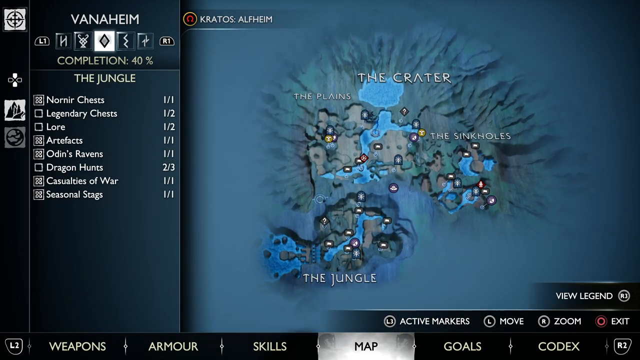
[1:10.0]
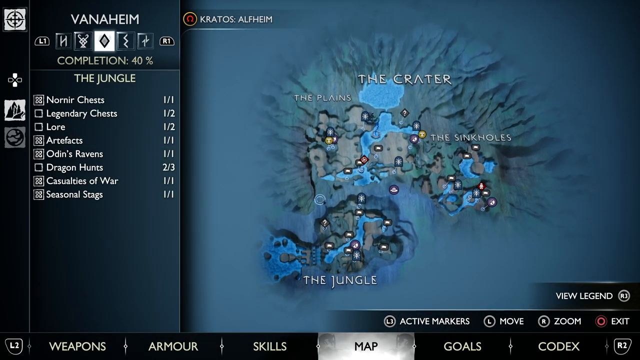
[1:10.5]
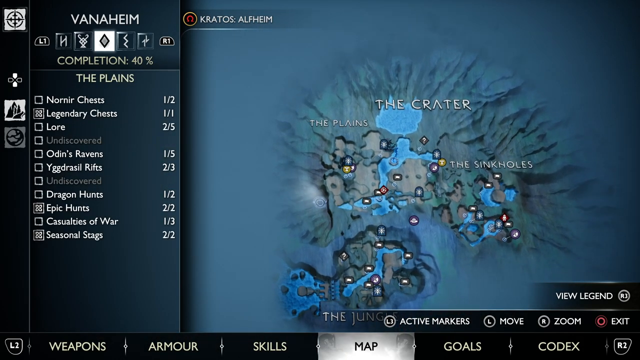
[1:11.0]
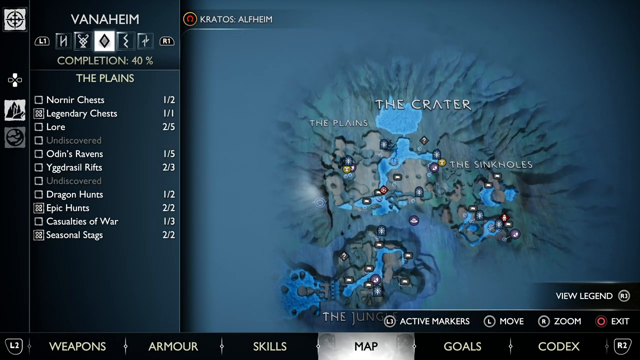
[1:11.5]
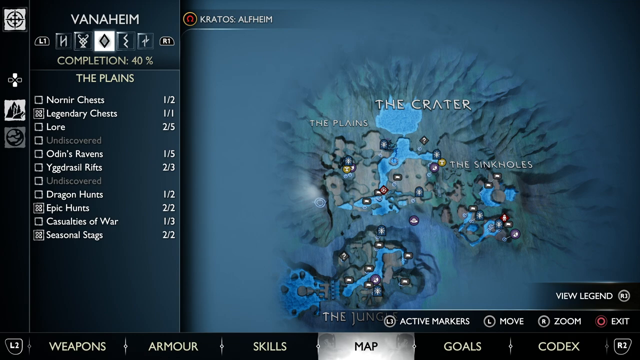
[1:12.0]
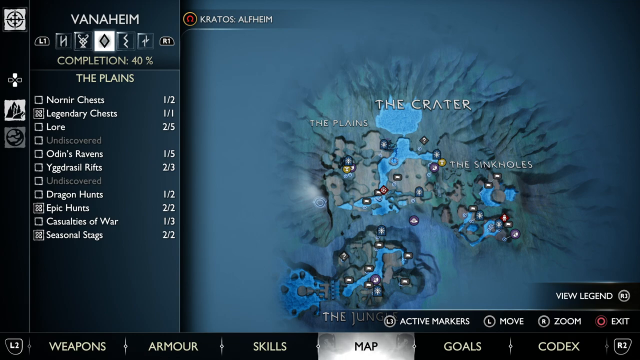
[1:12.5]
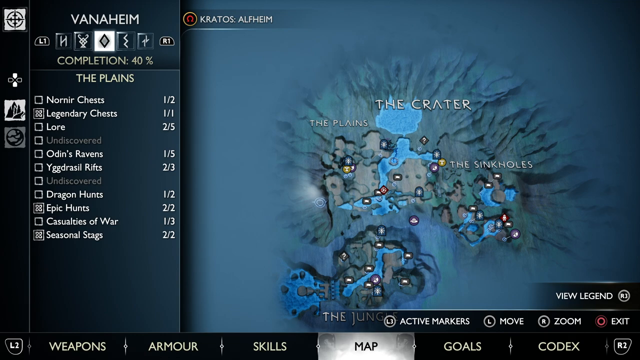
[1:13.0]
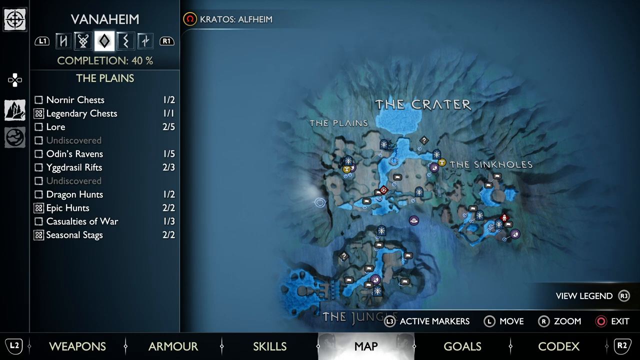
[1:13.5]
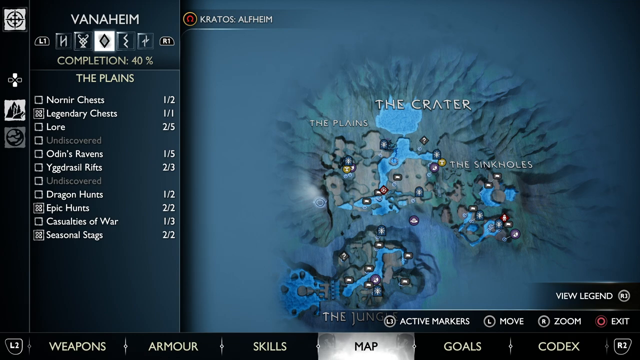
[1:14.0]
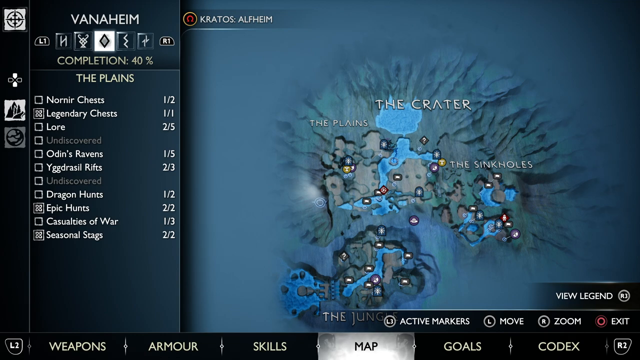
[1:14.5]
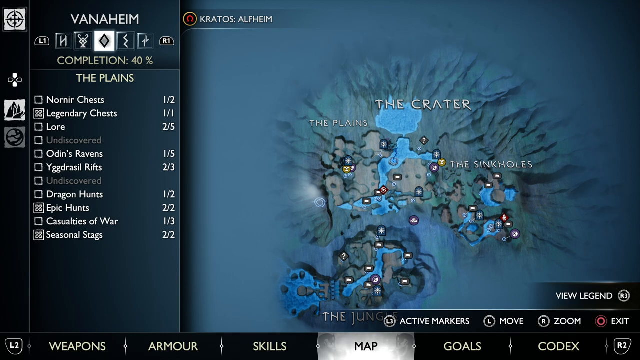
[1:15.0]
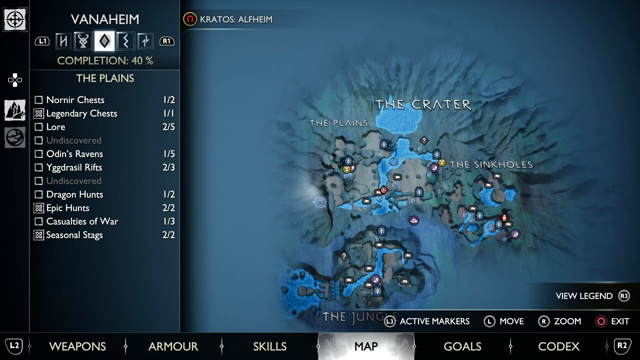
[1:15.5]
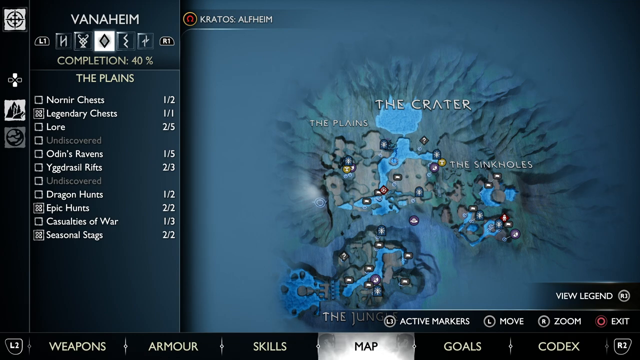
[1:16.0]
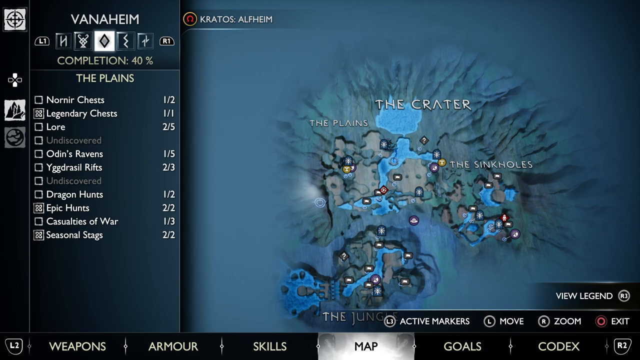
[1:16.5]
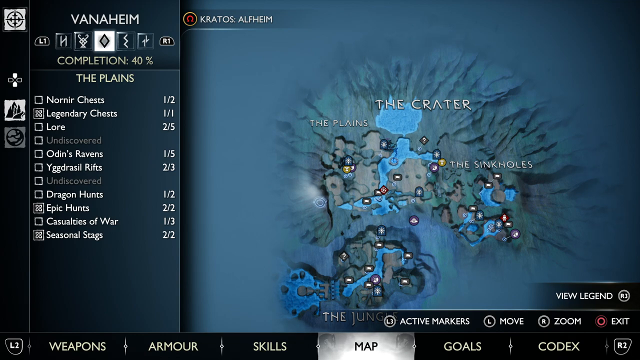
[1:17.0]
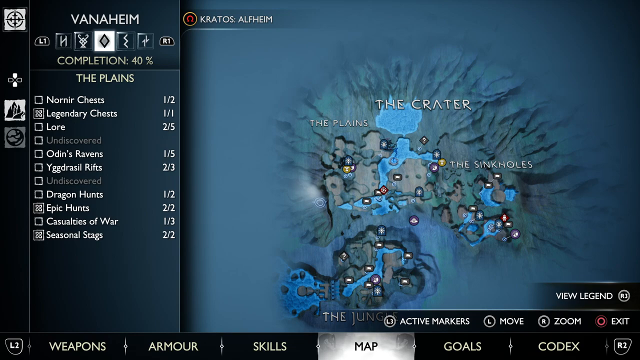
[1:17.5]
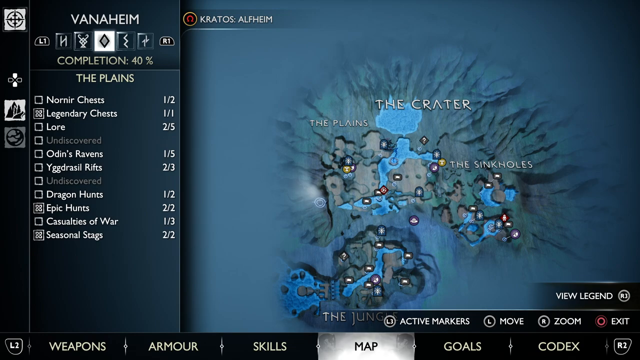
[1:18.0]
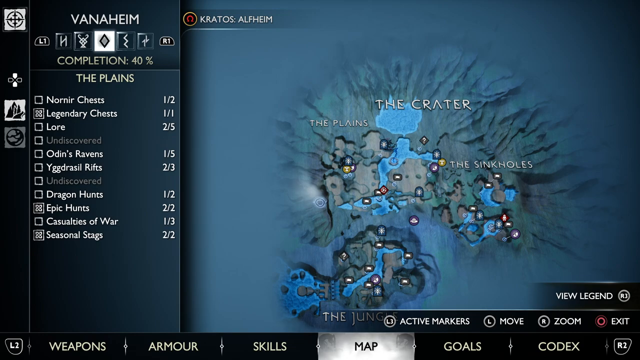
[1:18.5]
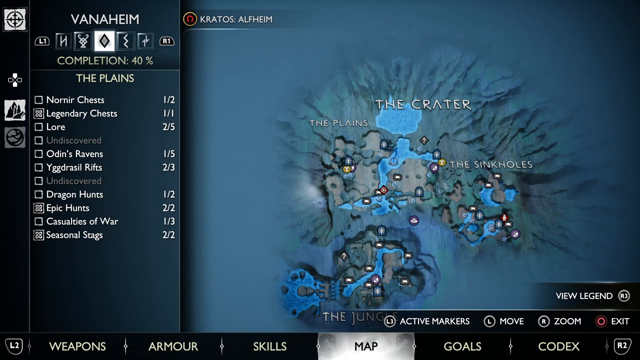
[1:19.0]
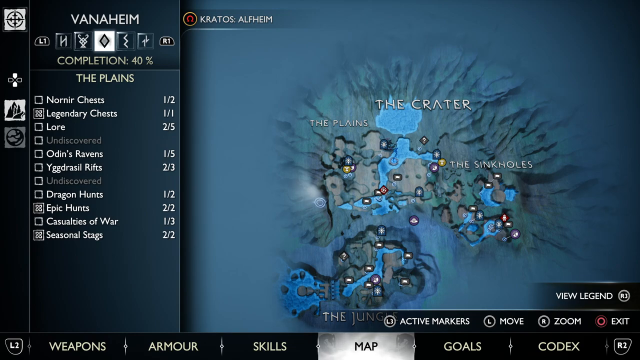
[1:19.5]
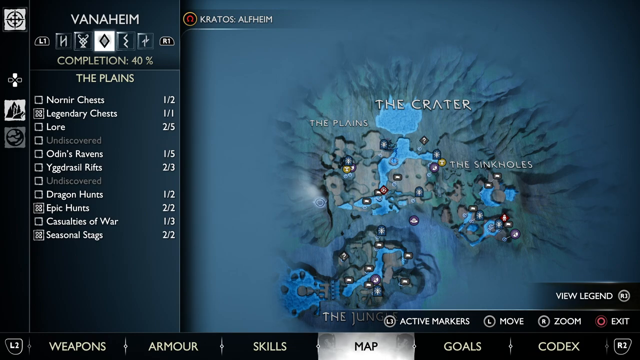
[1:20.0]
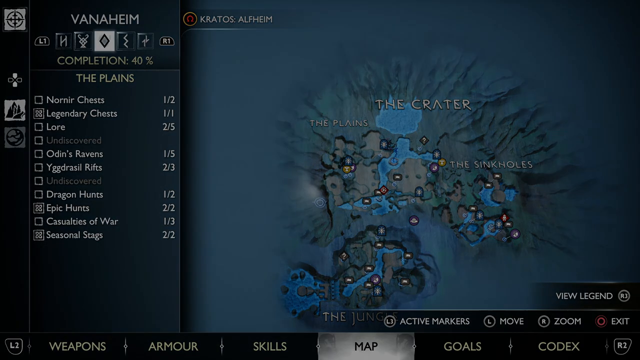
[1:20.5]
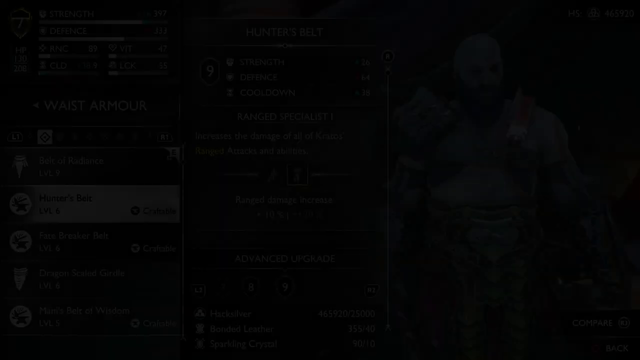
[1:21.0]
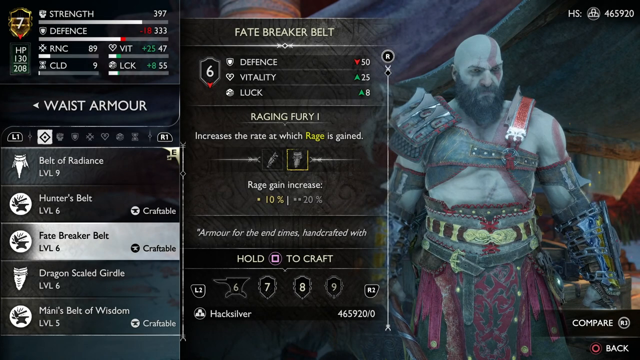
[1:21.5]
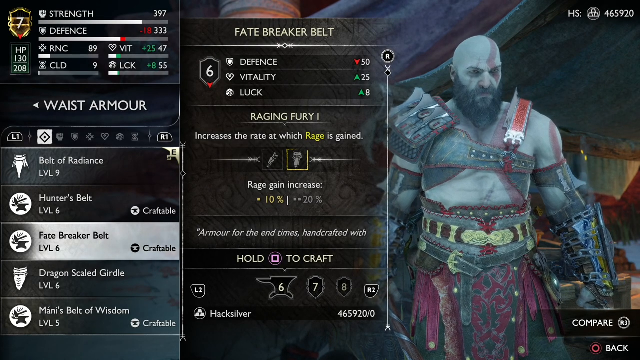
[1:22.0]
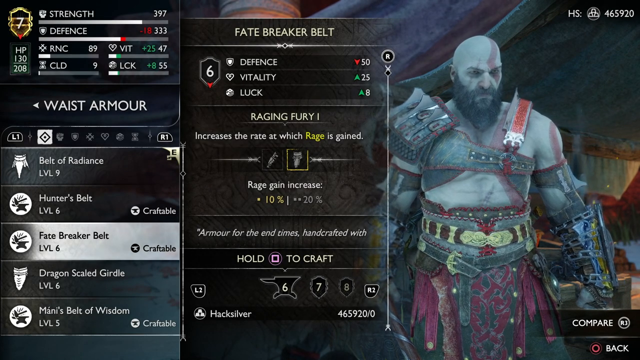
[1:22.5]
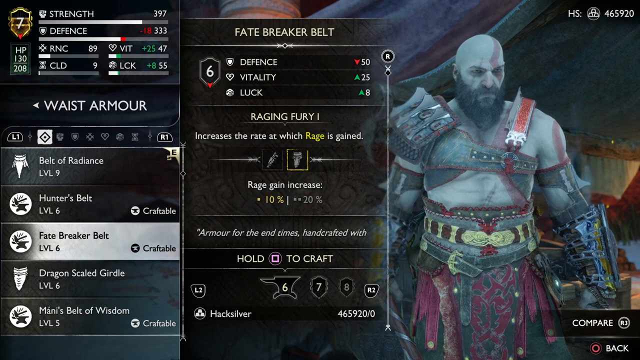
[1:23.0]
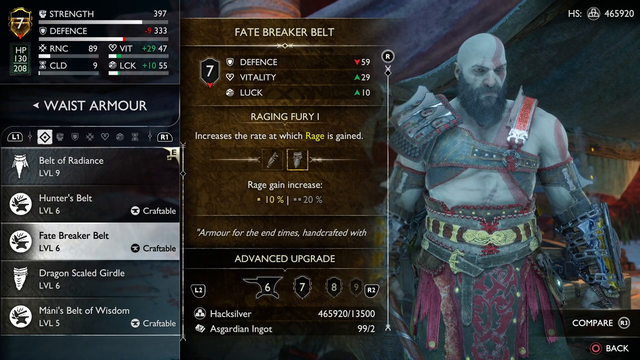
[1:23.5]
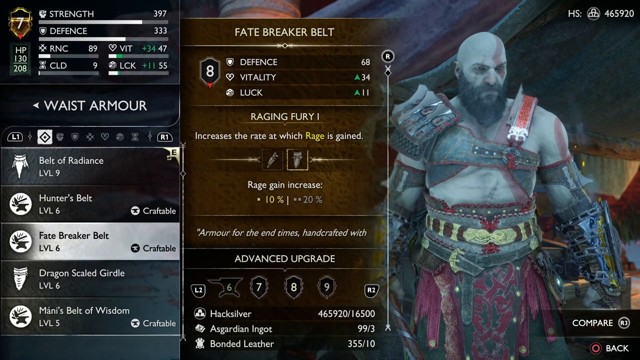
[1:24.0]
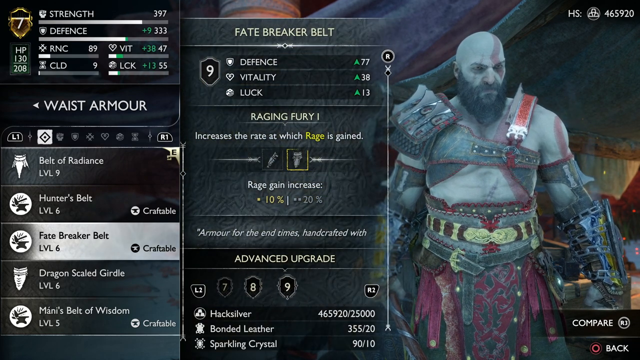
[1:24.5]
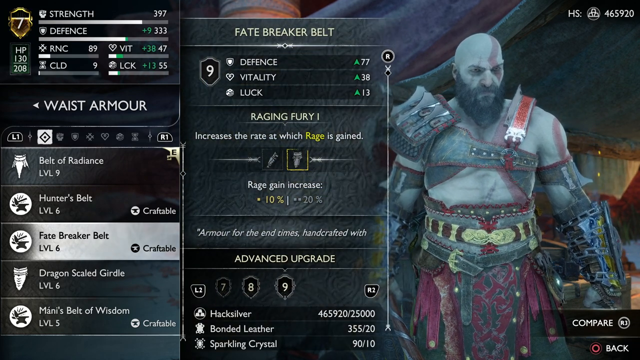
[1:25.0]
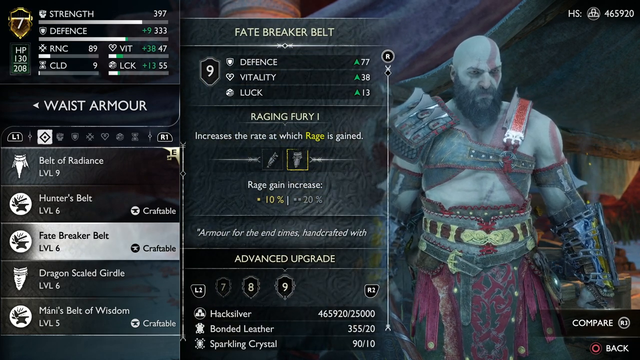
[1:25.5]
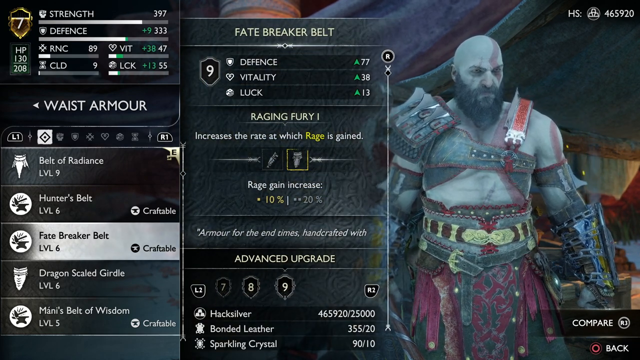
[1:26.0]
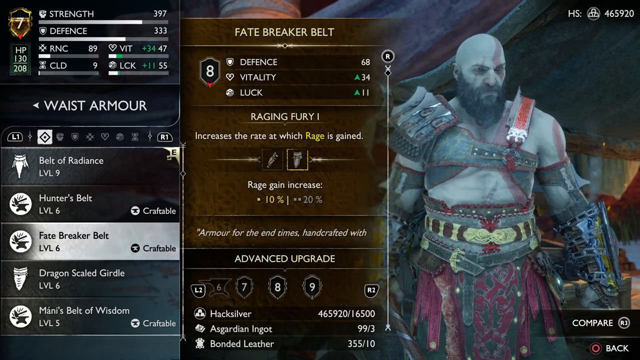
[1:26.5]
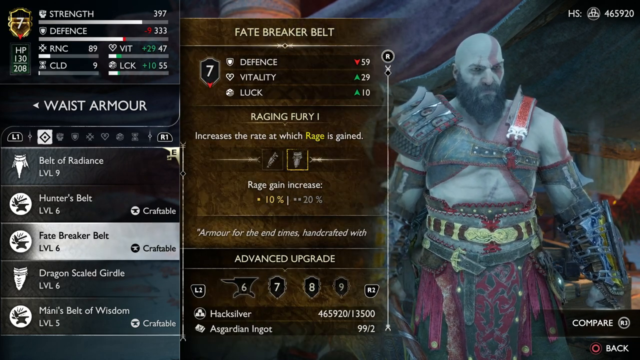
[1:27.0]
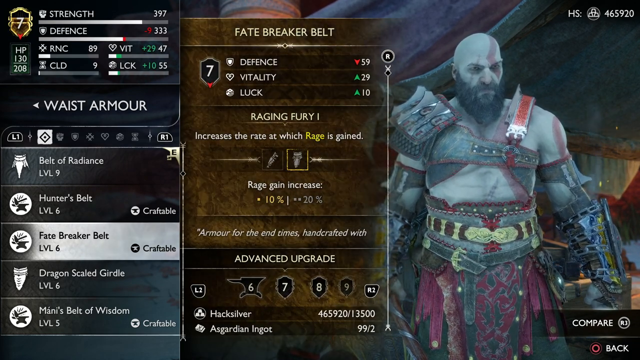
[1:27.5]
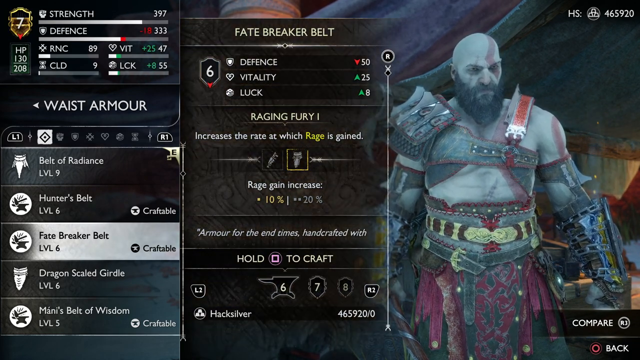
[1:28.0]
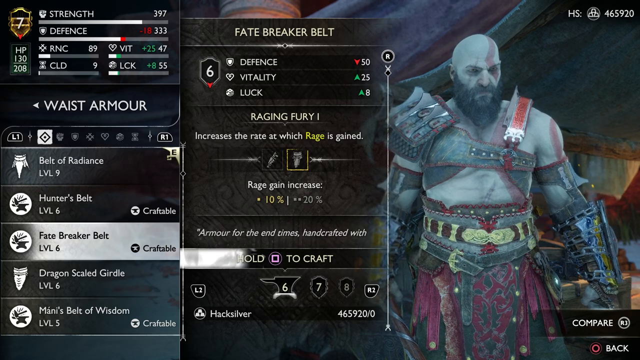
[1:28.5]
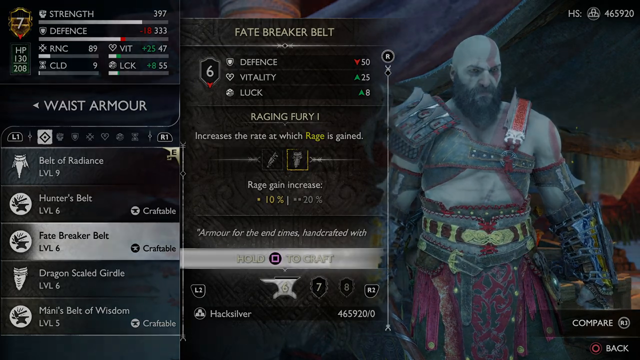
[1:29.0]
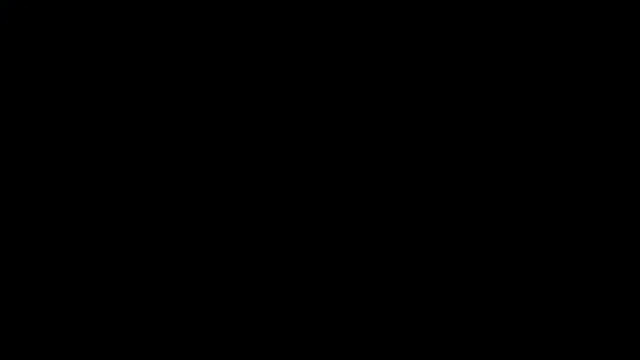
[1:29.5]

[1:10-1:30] The map view continues, showing the main location, which appears to be the Crater, with sublocations that appear to be the Plains on the left and the Sinkholes on the right. The view lingers over this section of the map, then transitions back to customizing the waist armor, with items previewed on Kratos: the Belt of Radiance, the Hunter's Belt, and the Fatebreaker Belt. These items are craftable and appear to have a list of ingredients as well as a list of stats, so this appears to be a crafting menu rather than the customization menu. The Fatebreaker Belt, which appears to be in focus, seems to require a number of skills, and a monetary requirement for "hacksilver" is listed at the bottom.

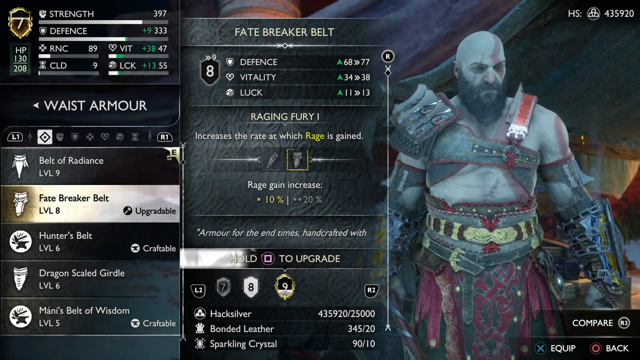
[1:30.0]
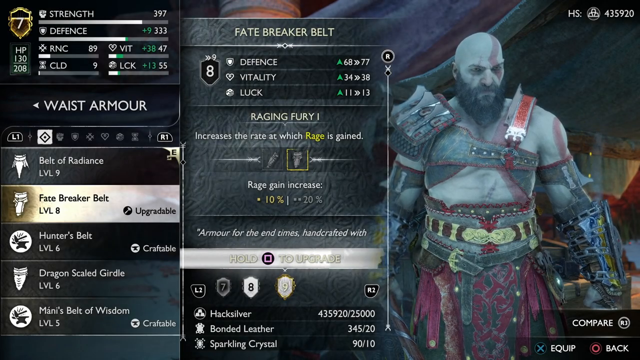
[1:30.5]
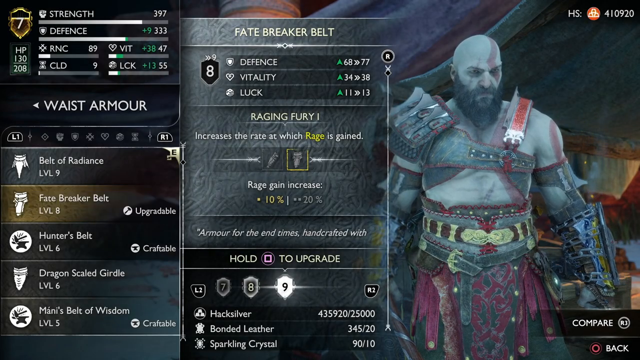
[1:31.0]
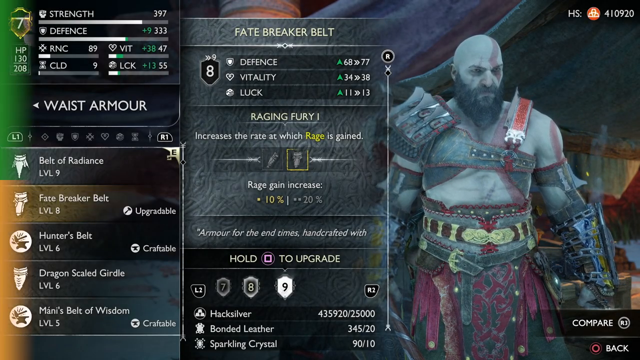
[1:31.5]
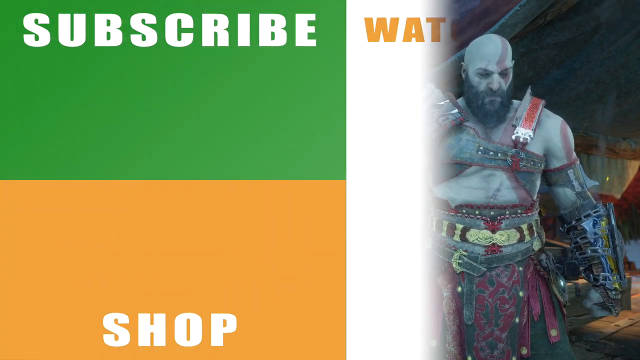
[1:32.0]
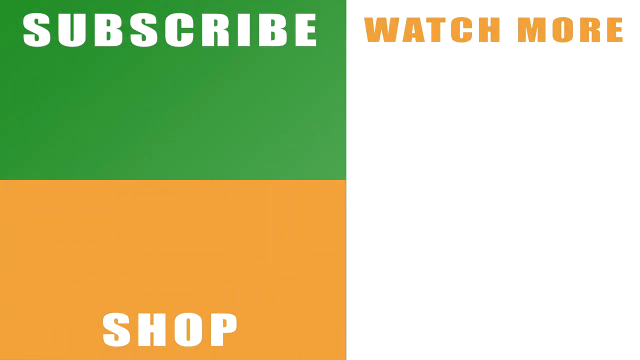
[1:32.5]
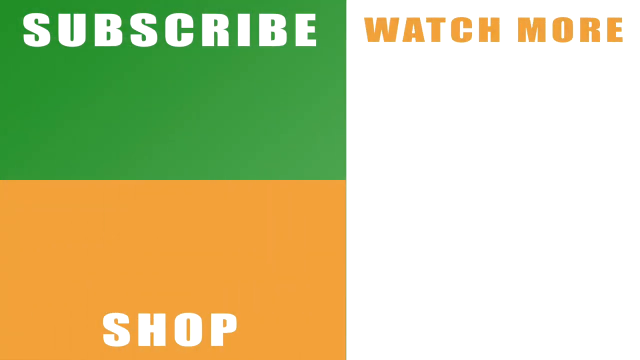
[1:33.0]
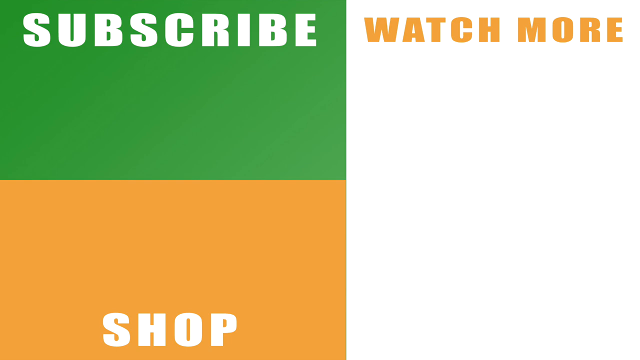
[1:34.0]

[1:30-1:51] The video continues on what appears to be the craft menu for waist armor, showing the list of skills and resources required to make the waist armor item being hovered on. This quickly transitions with a wipe to a graphic screen that says "Subscribe," "Watch More," and "Shop." "Subscribe" is white text on a green background in a green square in the top left corner. "Watch More" is orange text on a white background, apparently on a white rectangle taking up the right half of the screen. "Shop" appears to be white text on an orange background on the bottom left side of the screen. This appears to be a YouTube end card screen.